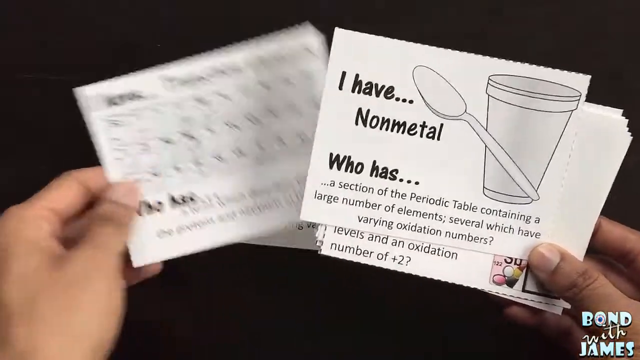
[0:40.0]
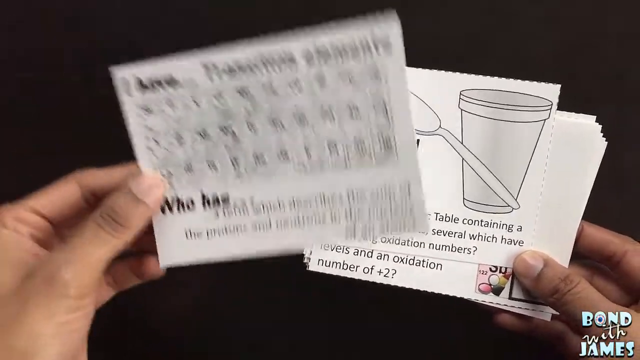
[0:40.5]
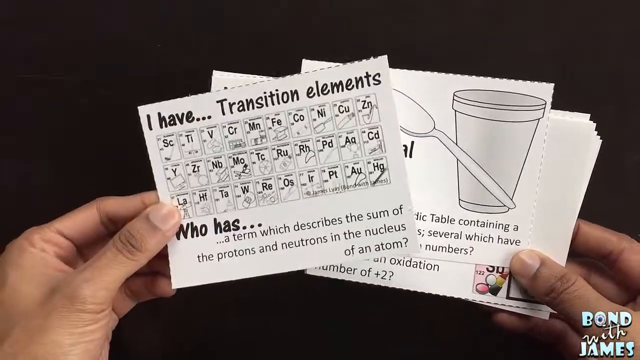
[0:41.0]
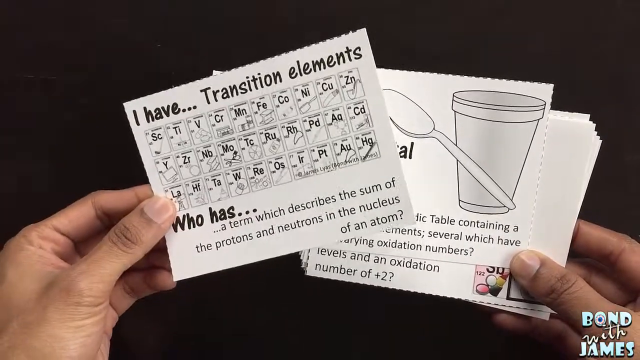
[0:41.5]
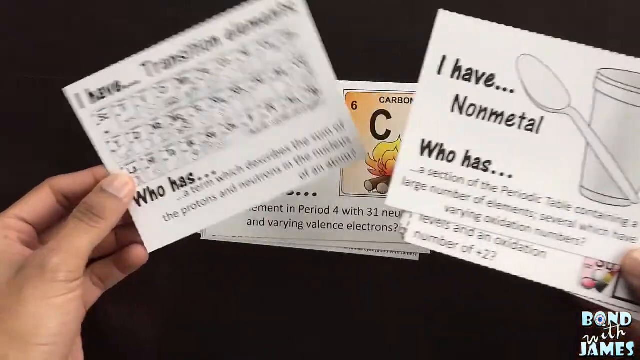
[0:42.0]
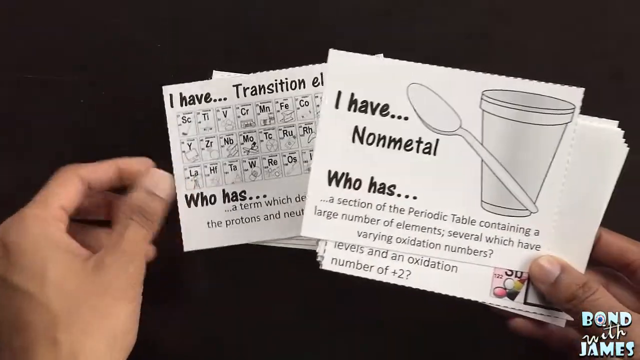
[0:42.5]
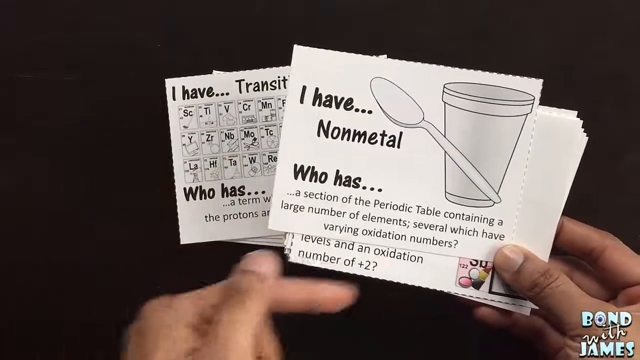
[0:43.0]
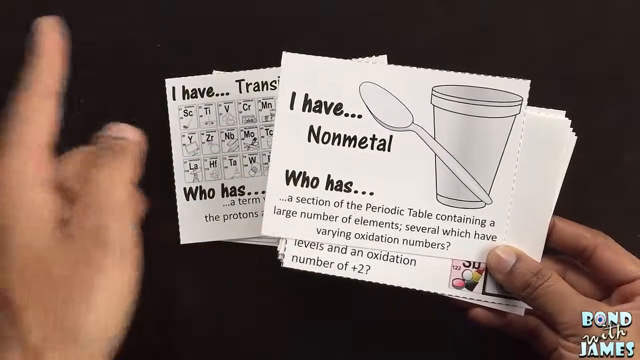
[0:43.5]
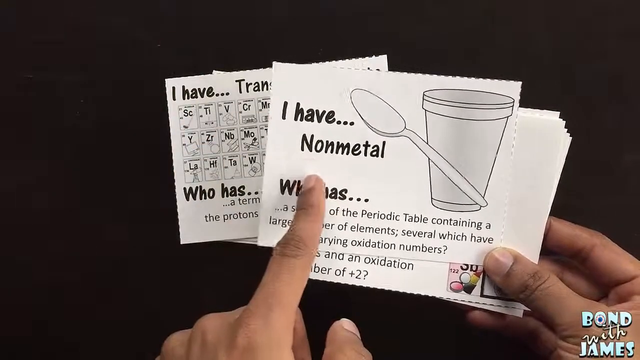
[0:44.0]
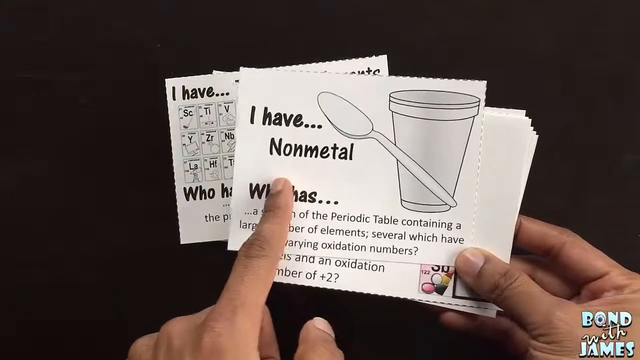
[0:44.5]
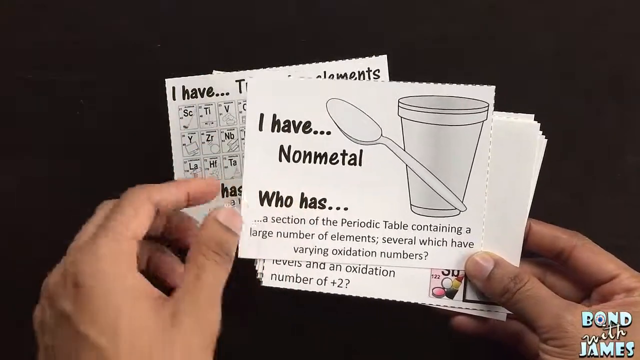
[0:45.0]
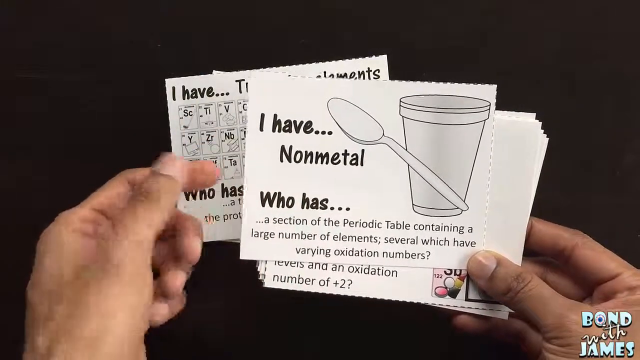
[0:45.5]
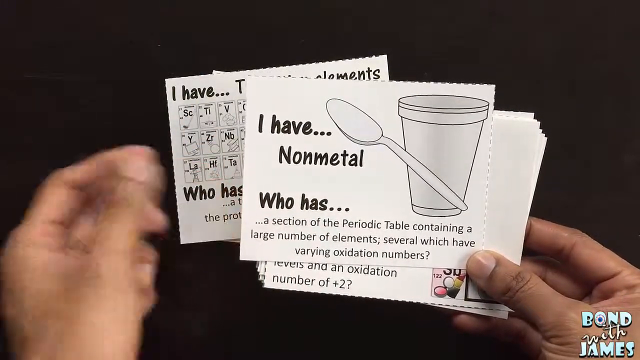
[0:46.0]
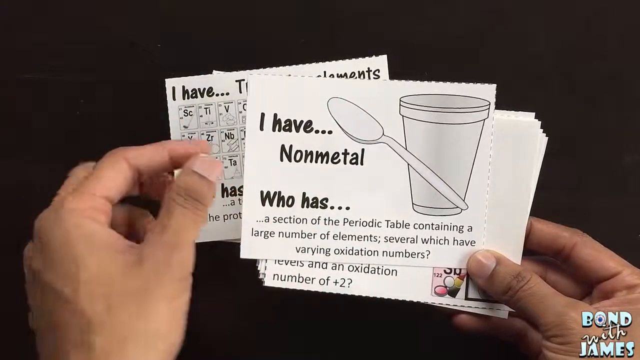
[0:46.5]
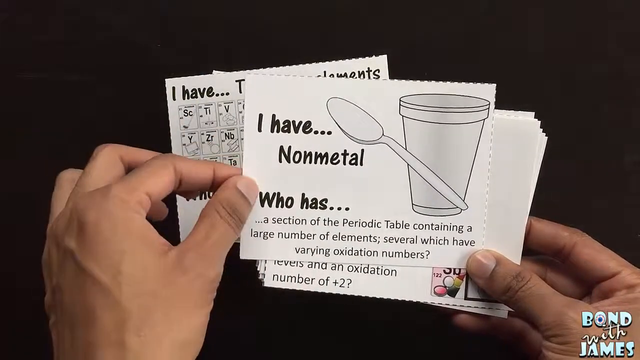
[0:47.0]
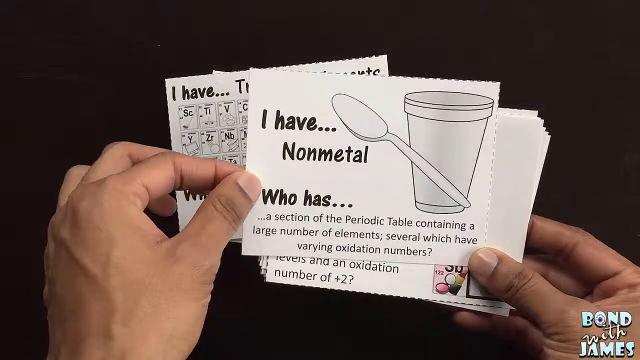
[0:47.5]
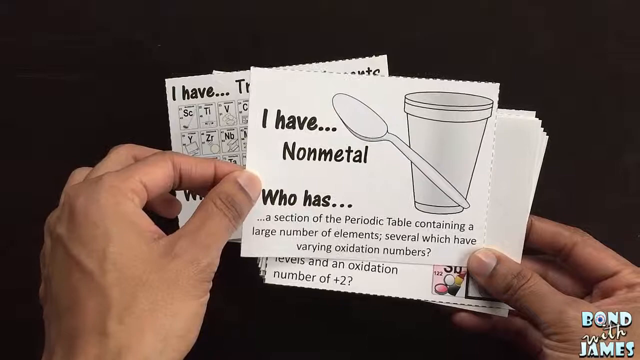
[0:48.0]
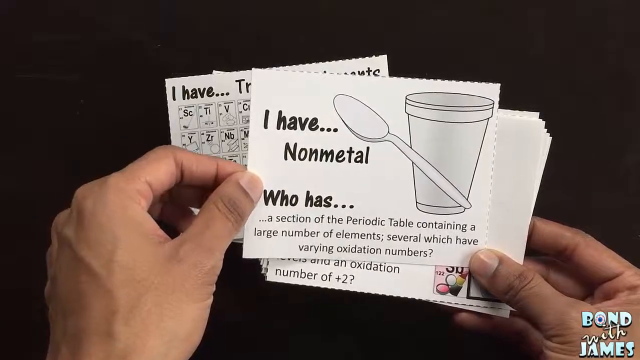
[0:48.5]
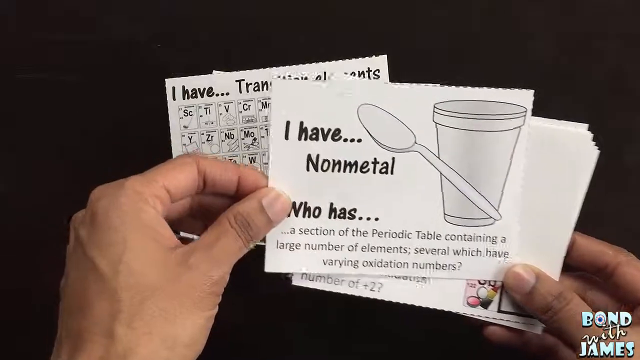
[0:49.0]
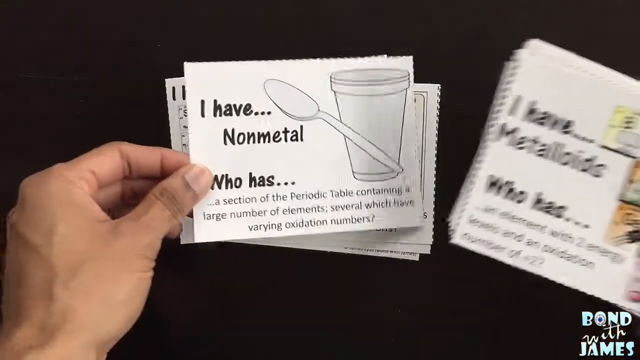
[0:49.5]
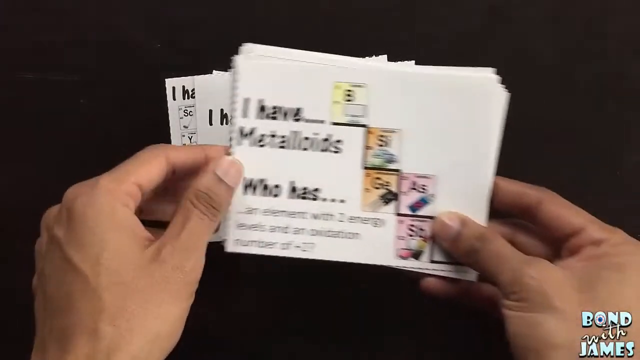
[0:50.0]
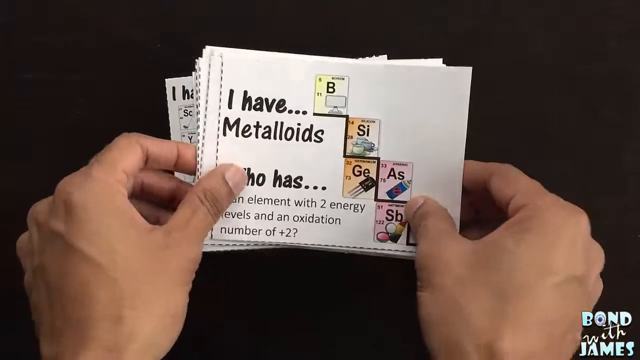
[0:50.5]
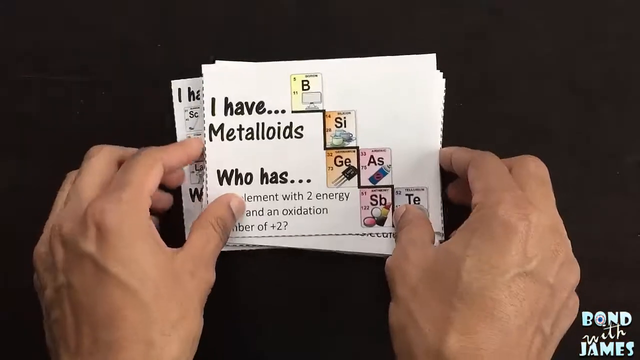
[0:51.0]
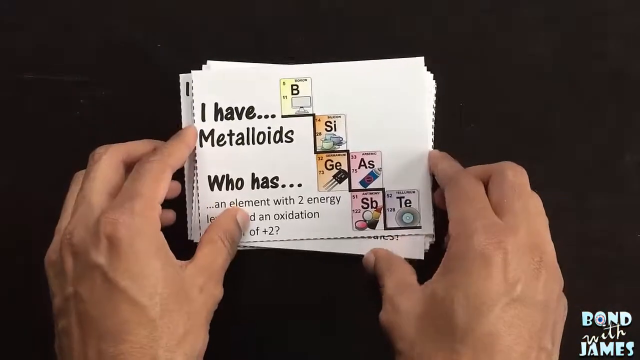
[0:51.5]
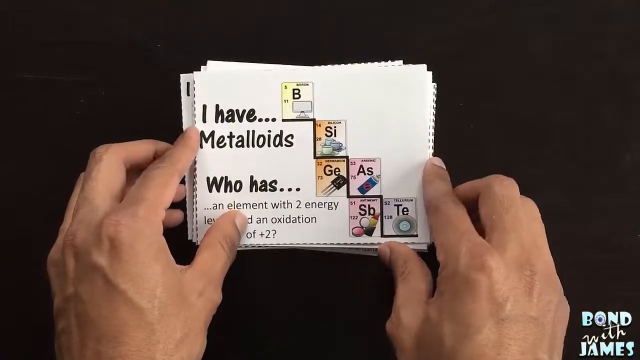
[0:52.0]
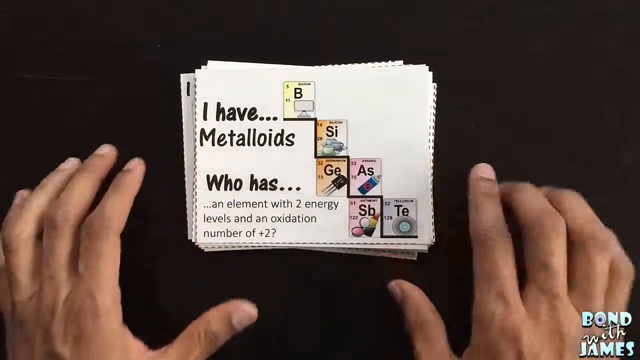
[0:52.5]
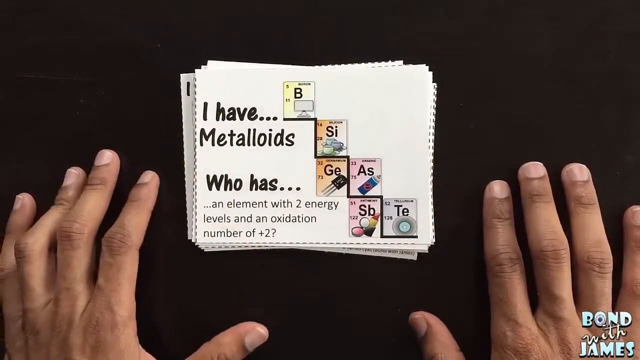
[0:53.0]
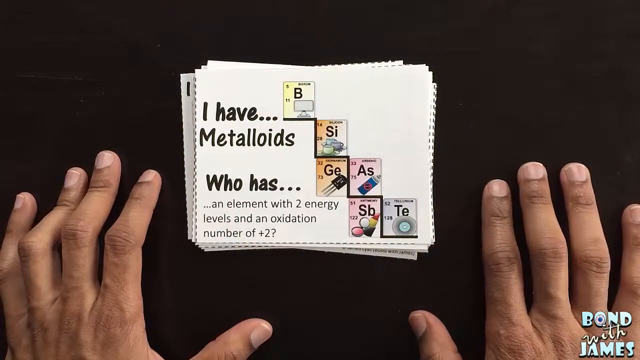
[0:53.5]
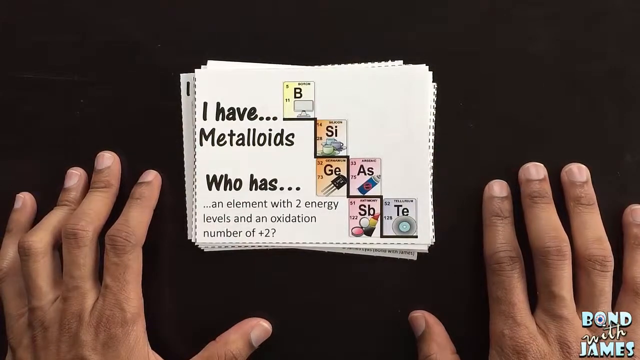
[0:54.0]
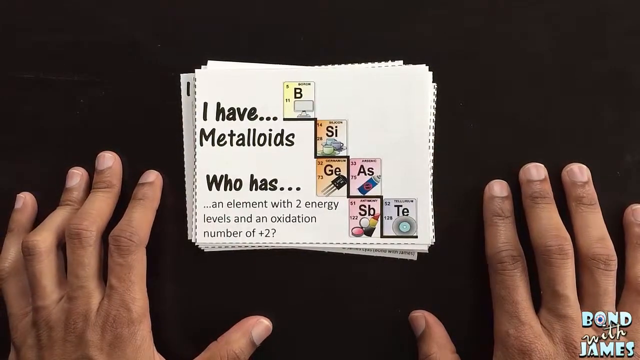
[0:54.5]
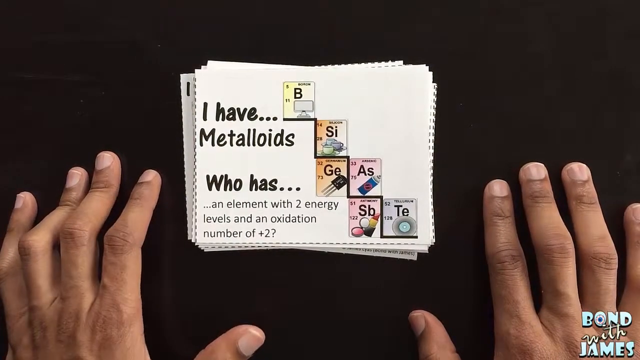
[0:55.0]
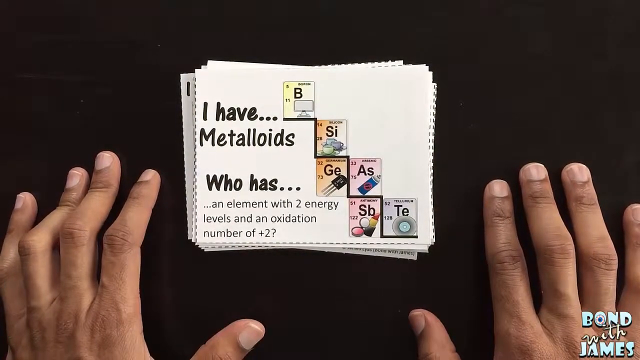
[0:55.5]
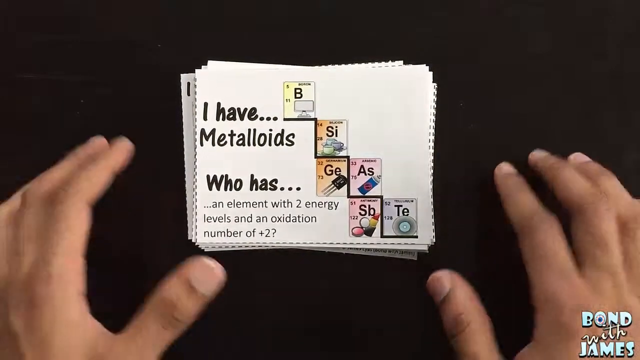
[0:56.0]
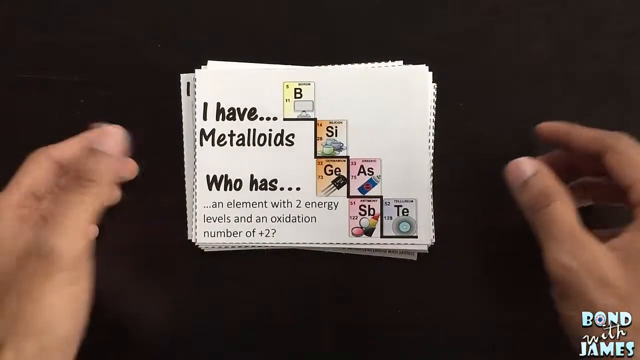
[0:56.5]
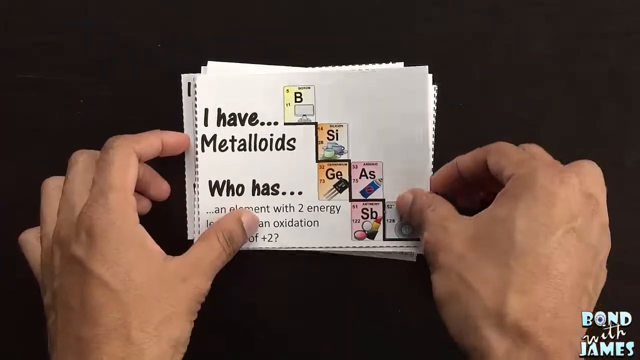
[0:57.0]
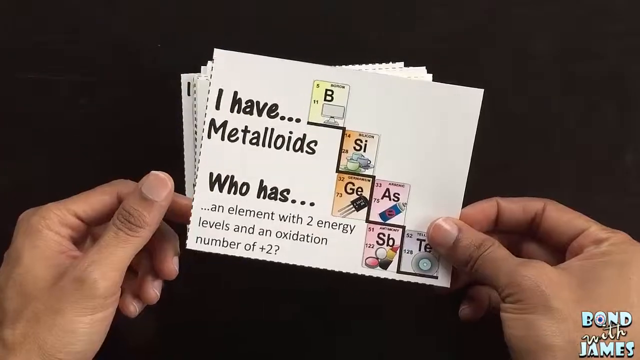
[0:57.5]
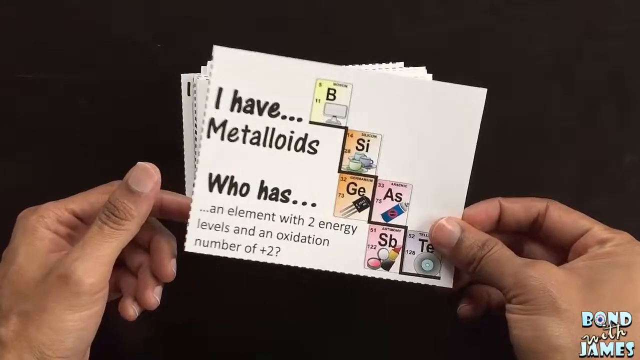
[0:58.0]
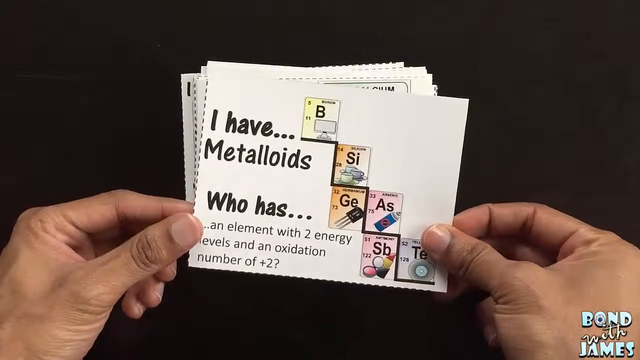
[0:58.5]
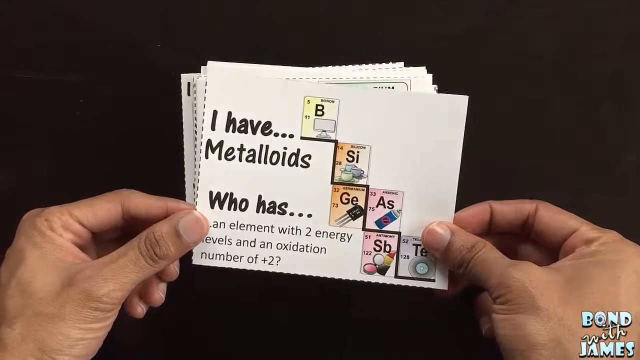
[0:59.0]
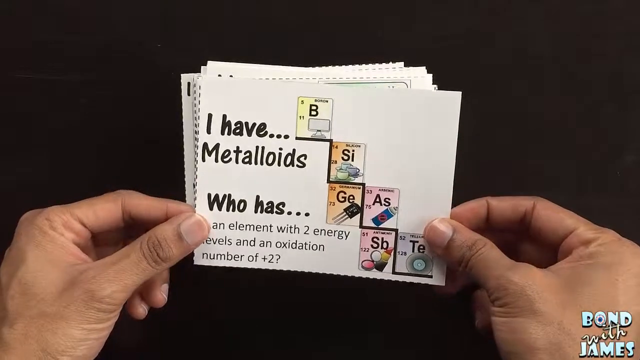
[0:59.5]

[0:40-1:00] The hand slides the cue card with many periodic elements above the card he is holding in his right hand. This card has 10 periodic elements in each of 3 rows, with the text "I have...transition elements" and, at the bottom, "Who has...a term which describes the sum of the protons and neutrons in the nucleus of an atom". The hand brings back the previous card with the spoon and cup. The person spins his index finger in a clockwise circle and points toward the "who has" text, then pinches the edge of the card with his left index finger and thumb. He puts the card down on the table and places the deck of cue cards on it, so the top card now says "I have metalloids". He makes the cards more organized and places both hands on the table.